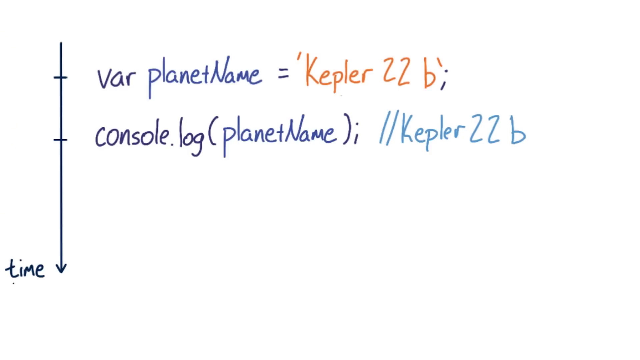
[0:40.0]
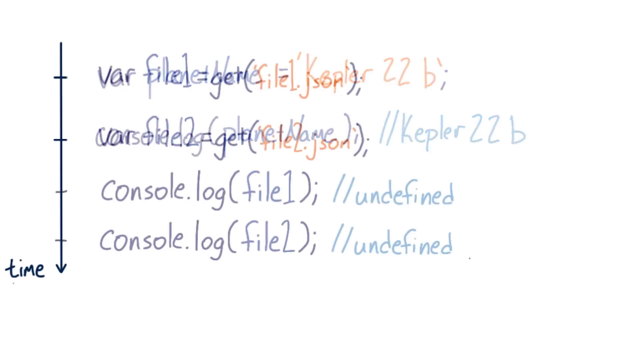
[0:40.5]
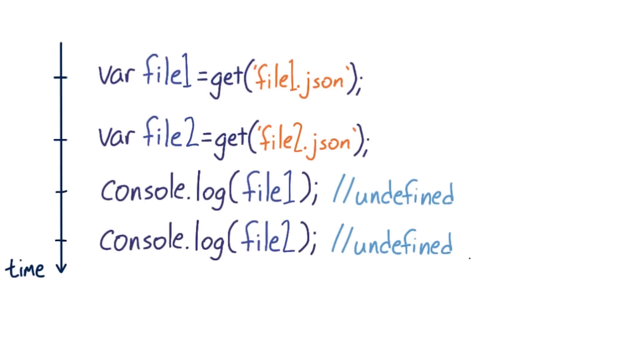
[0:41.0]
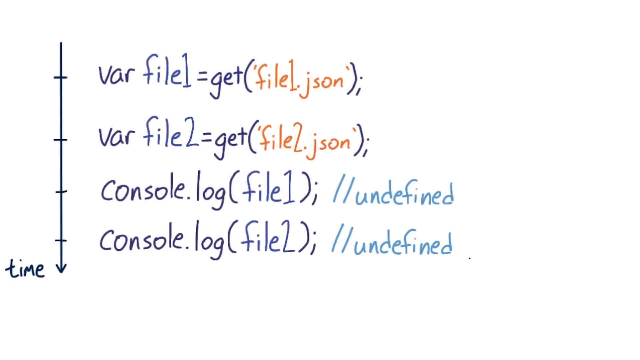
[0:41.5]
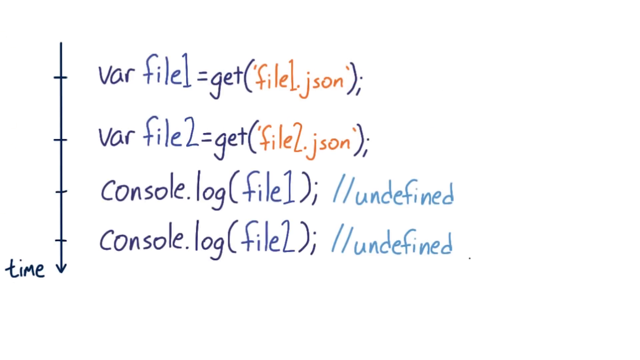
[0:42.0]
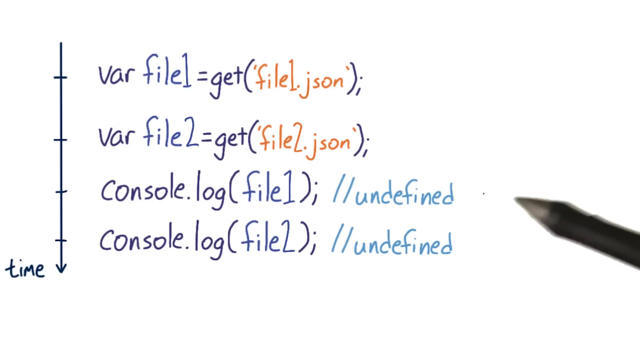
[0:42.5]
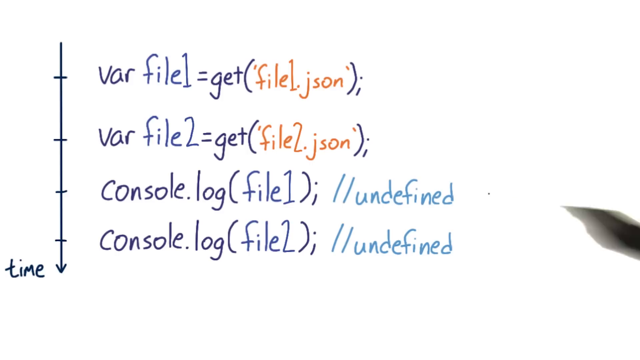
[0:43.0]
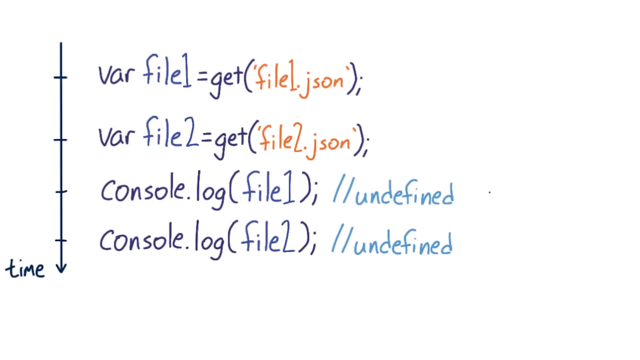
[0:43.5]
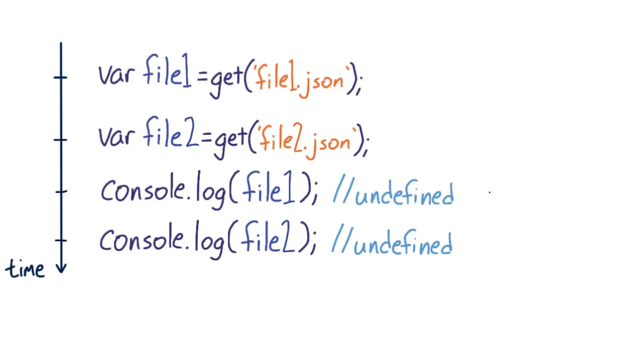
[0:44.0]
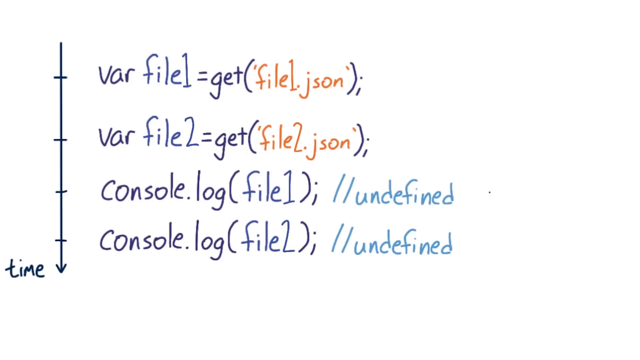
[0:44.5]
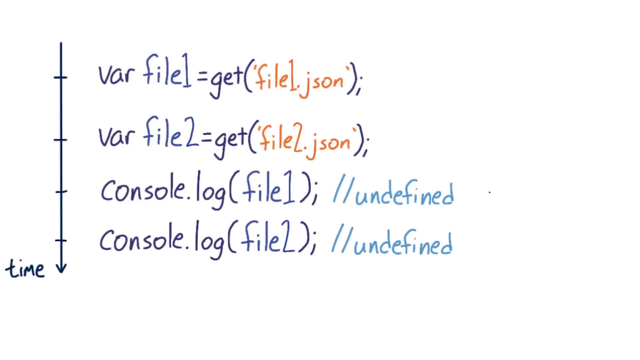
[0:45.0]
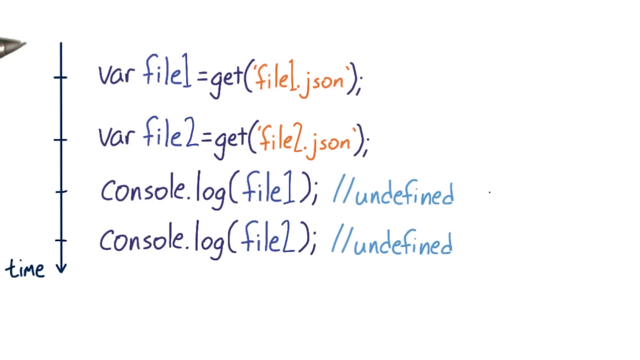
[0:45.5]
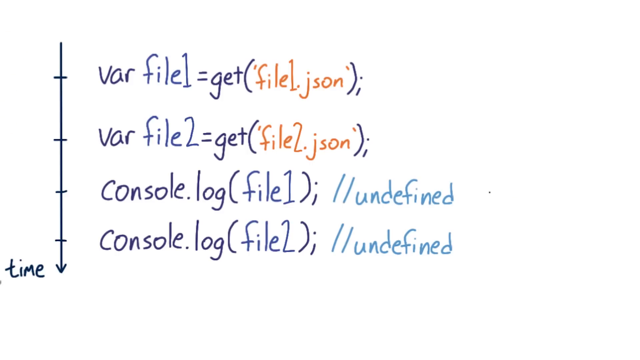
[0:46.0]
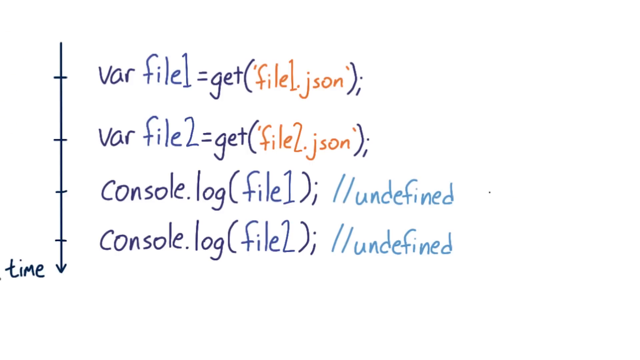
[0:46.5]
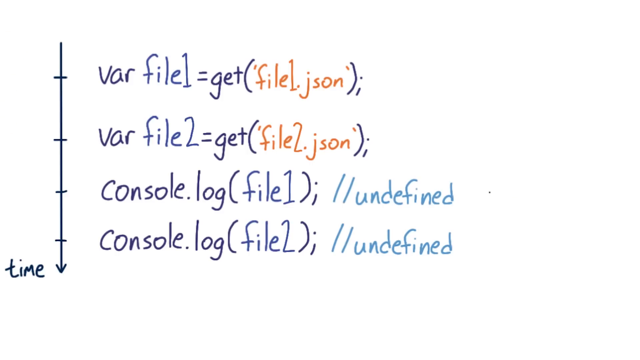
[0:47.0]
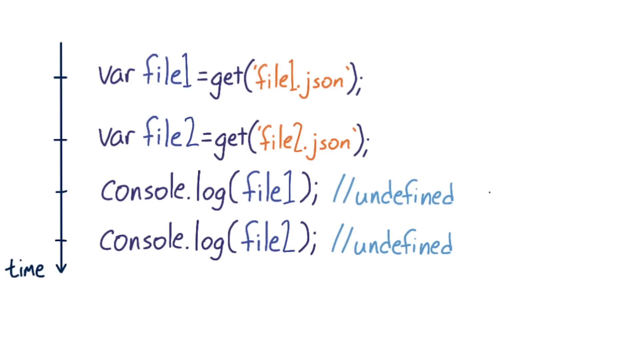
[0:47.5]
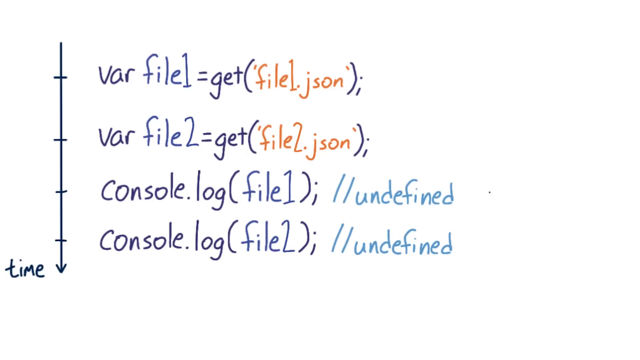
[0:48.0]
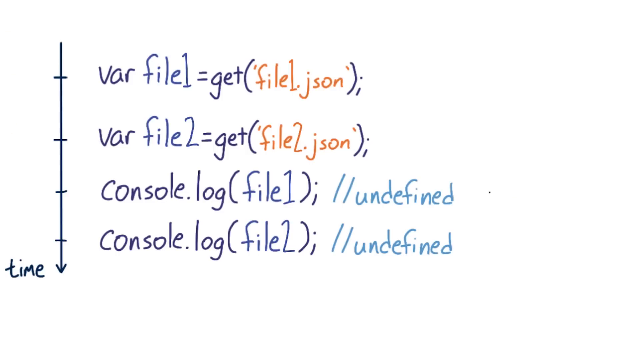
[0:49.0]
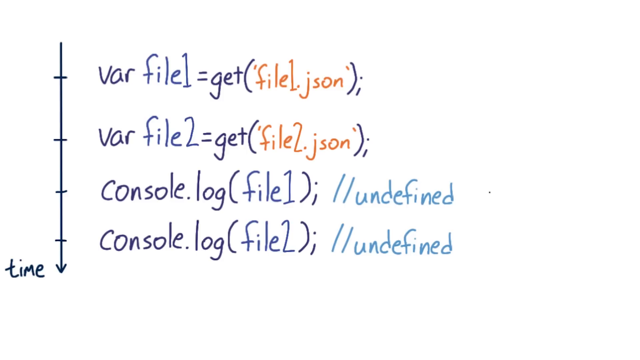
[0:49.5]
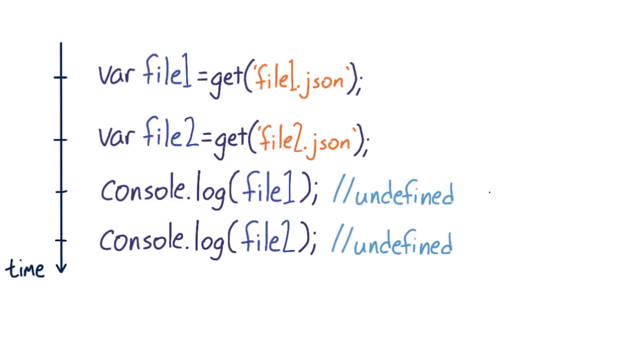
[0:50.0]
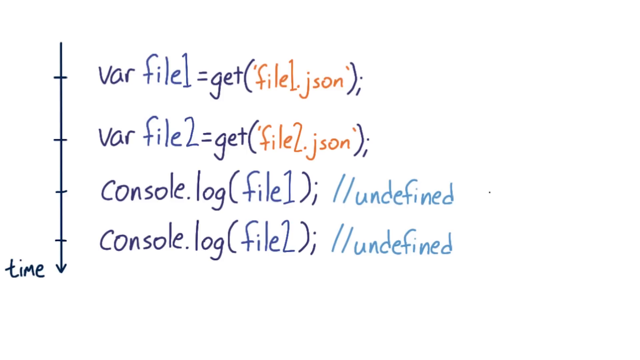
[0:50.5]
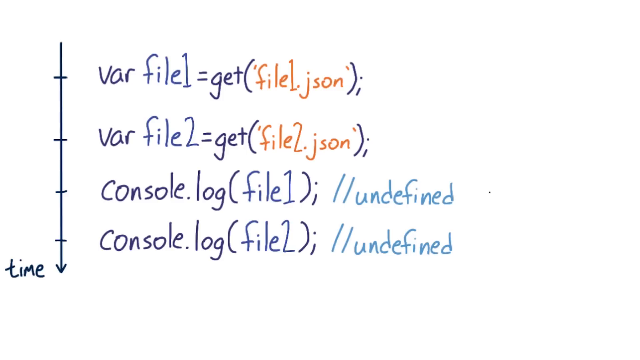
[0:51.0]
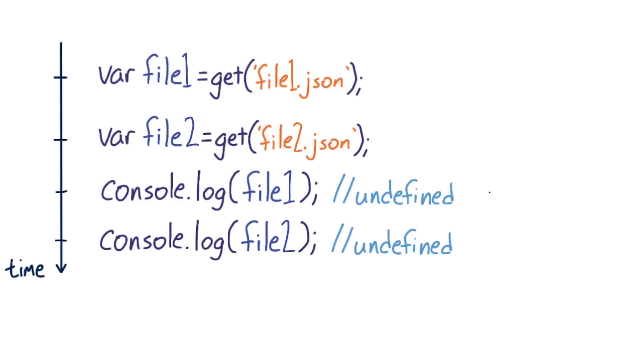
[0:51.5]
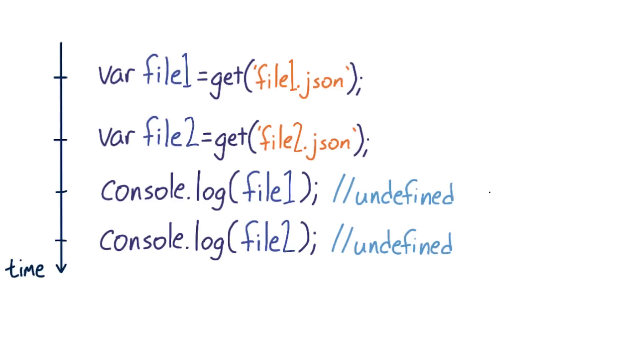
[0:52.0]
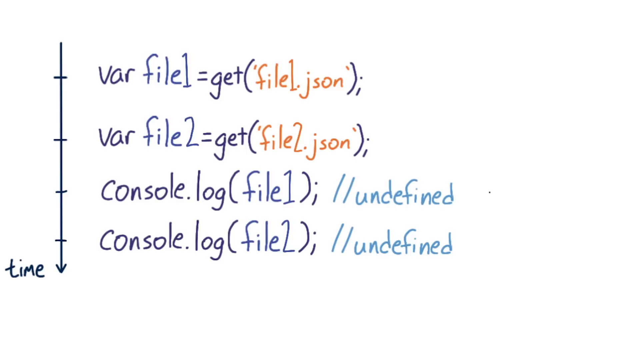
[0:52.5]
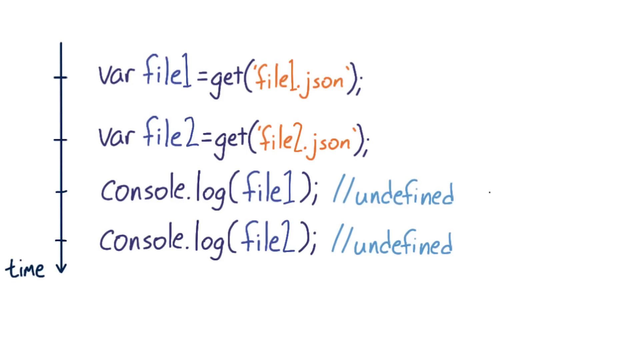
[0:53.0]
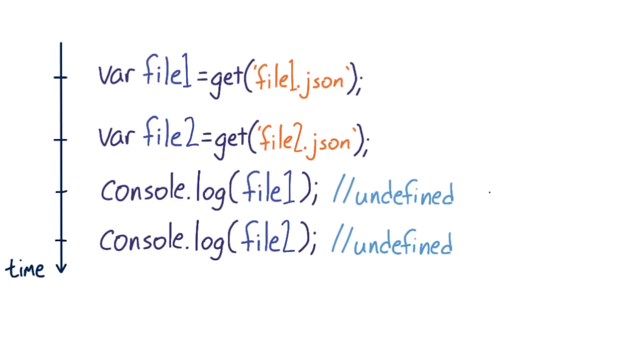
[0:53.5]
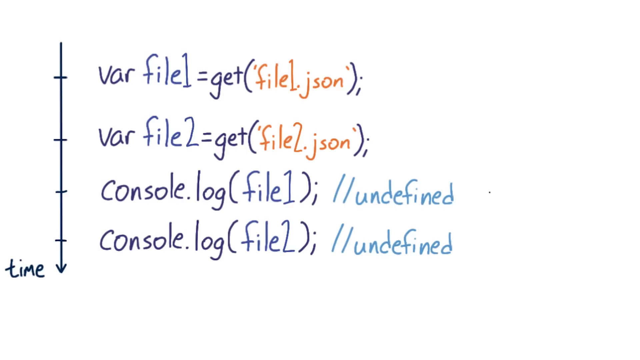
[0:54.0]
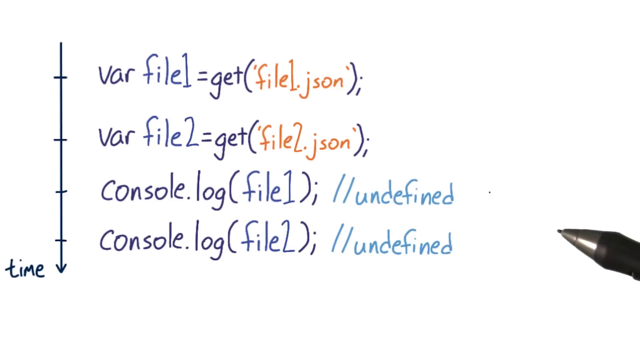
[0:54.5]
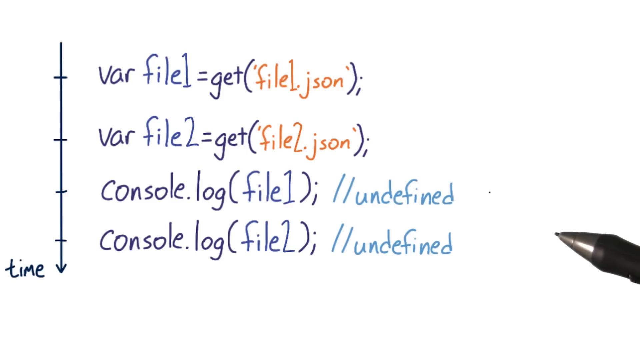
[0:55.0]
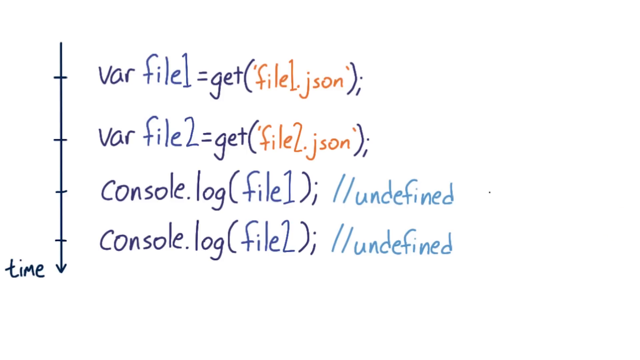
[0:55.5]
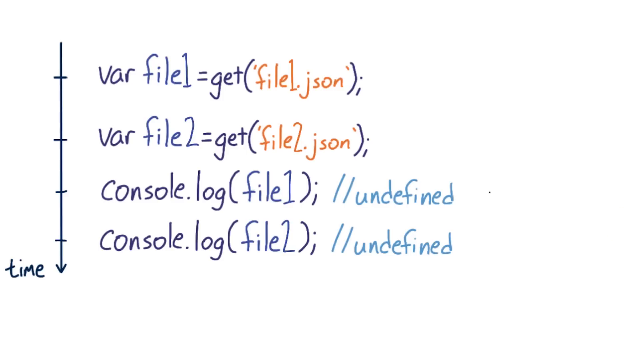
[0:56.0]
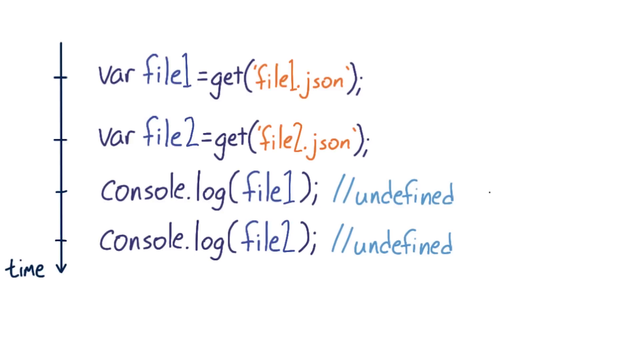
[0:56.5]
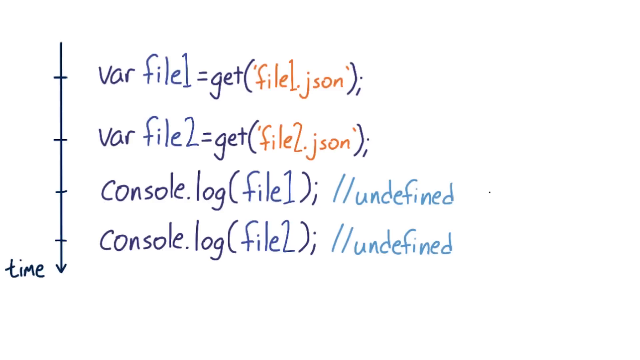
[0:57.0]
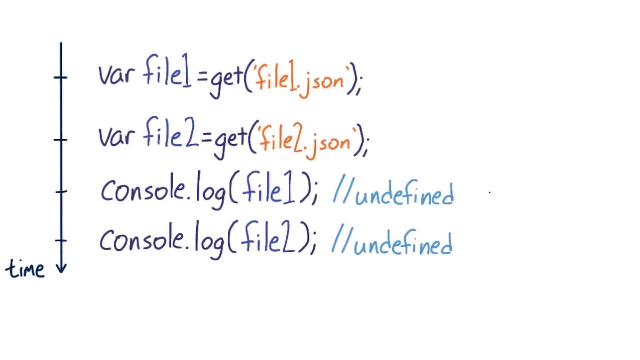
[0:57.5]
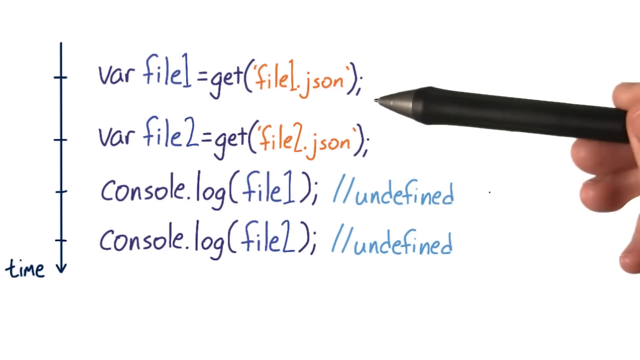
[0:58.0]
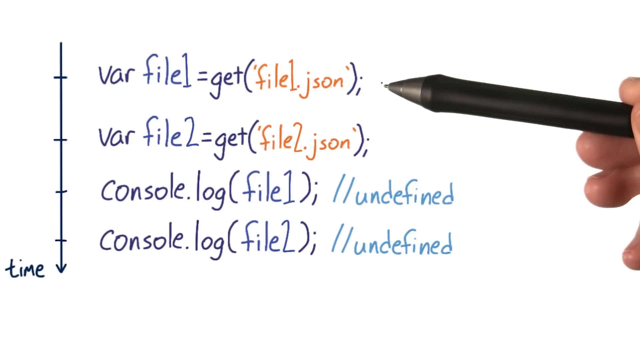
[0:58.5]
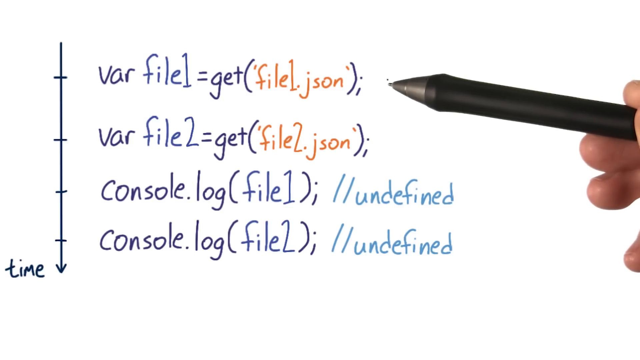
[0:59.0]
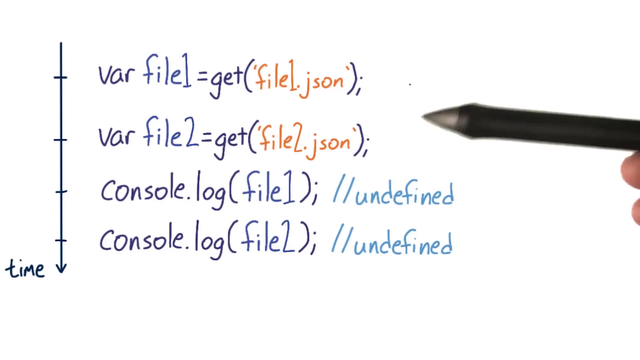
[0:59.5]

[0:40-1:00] Lines of written code appear against a vertical line with a couple of arrows on it, and at the bottom of the vertical line it says "time". The first line reads "var planetName = Kepler-22b", with "var planetName" in dark blue and "Kepler-22b" in orange. The next line down reads "console.log(planetName); //Kepler-22b", with this "Kepler-22b" in a lighter blue. Other lines of code then appear. From the top down, "var file1 = get(file1.json)" is written in orange, and "var file2 = get(file2.json)" is also in orange, each followed by a semicolon. Below them are "console.log(file1); //undefined" and "console.log(file2); //undefined", with "undefined" in a lighter blue on each line.